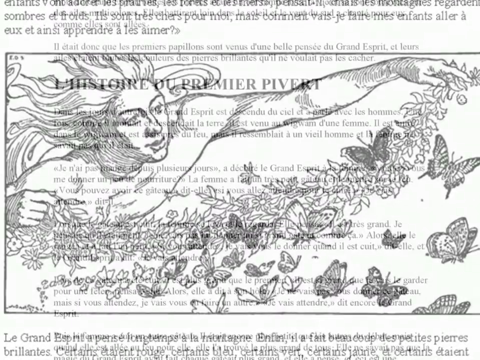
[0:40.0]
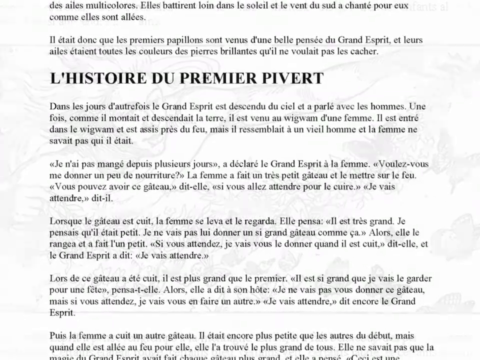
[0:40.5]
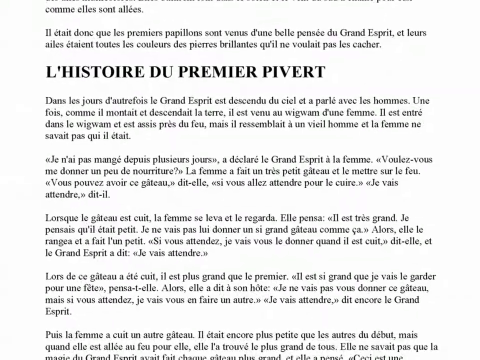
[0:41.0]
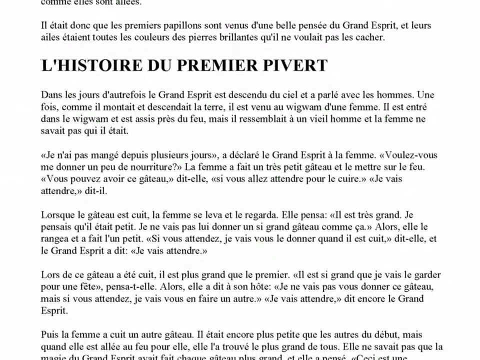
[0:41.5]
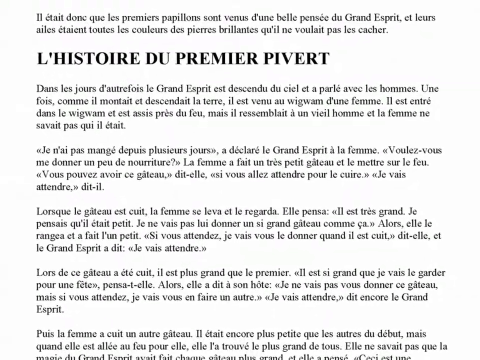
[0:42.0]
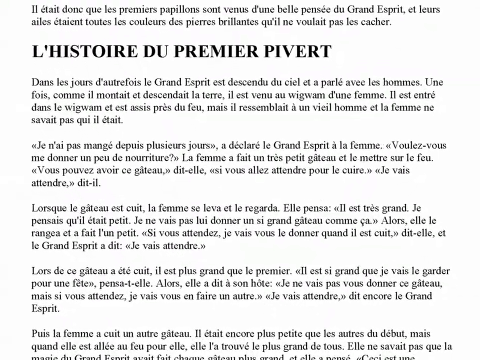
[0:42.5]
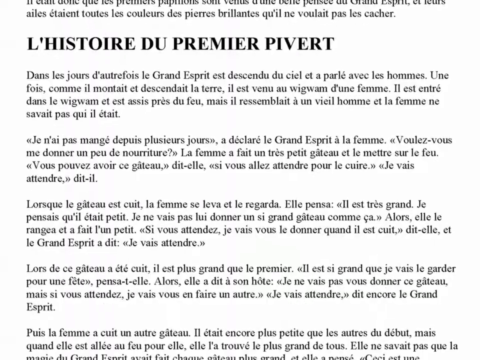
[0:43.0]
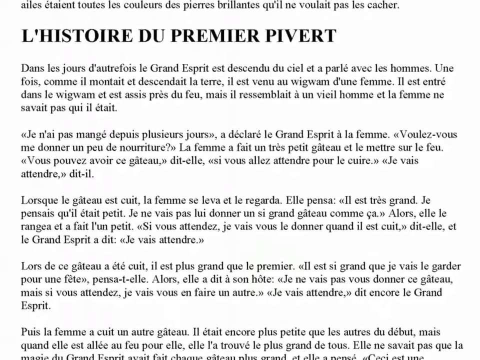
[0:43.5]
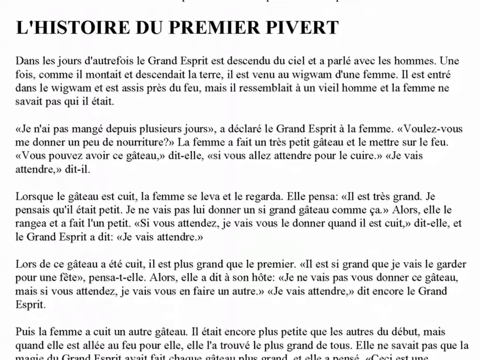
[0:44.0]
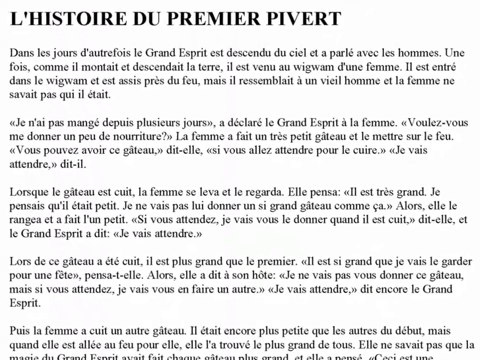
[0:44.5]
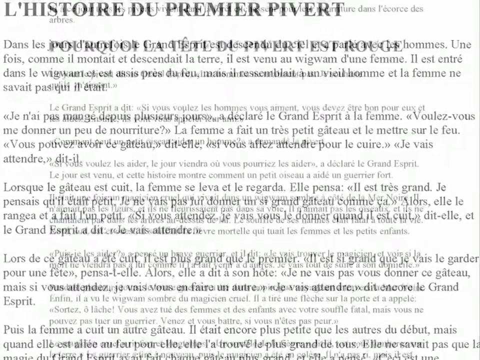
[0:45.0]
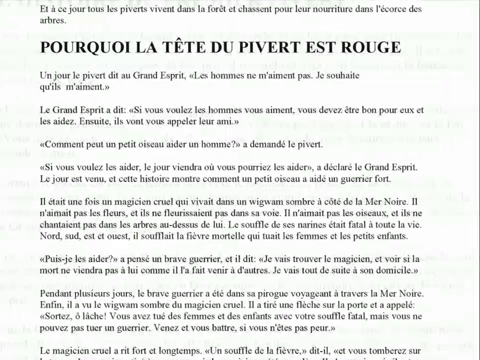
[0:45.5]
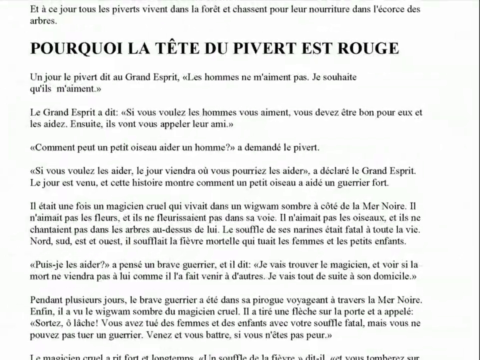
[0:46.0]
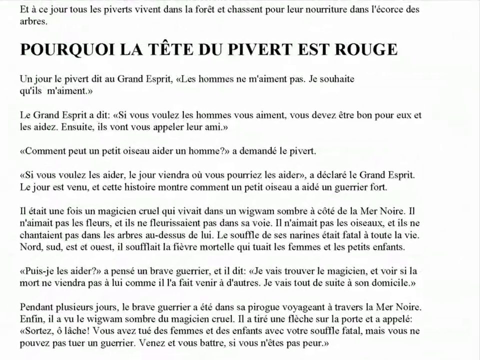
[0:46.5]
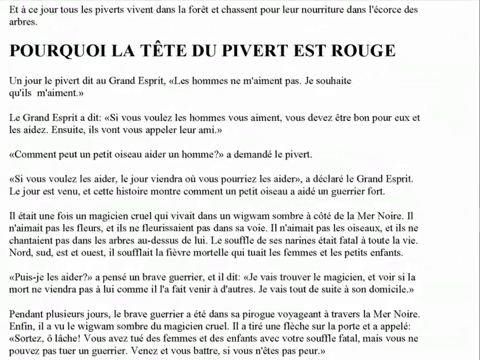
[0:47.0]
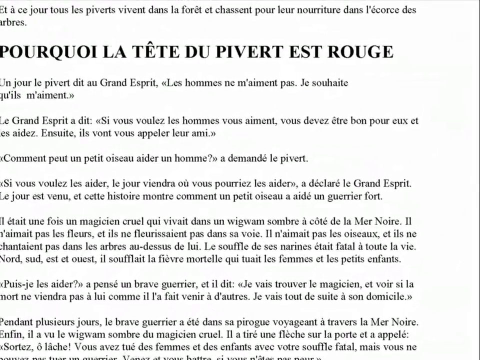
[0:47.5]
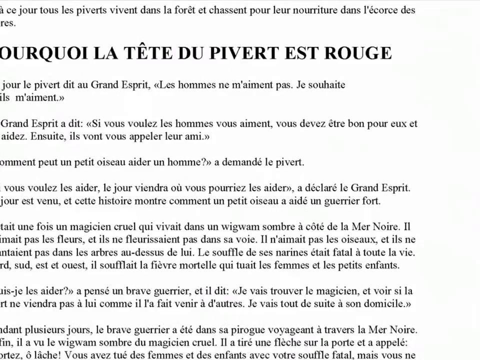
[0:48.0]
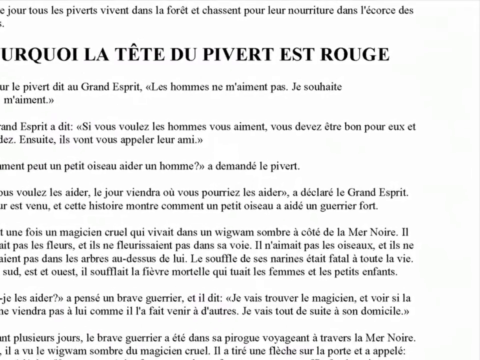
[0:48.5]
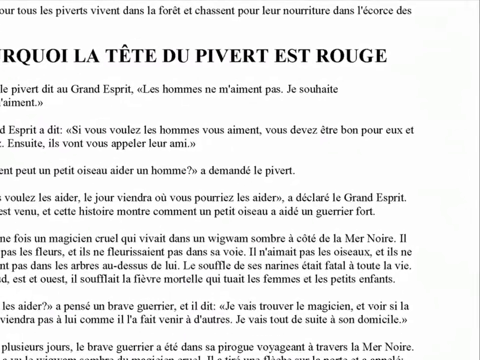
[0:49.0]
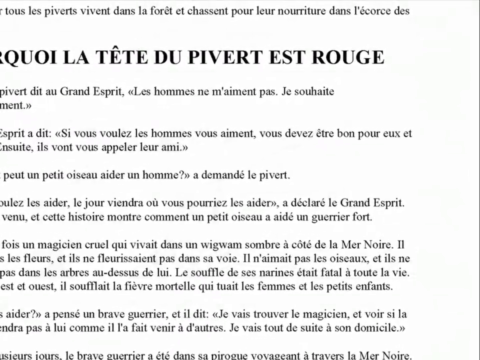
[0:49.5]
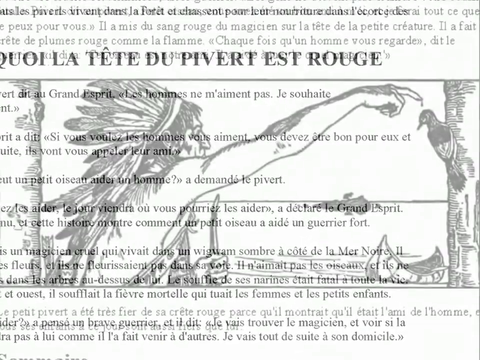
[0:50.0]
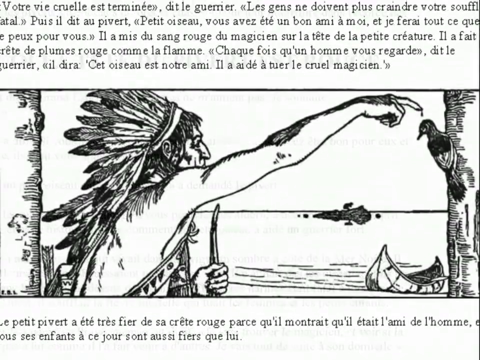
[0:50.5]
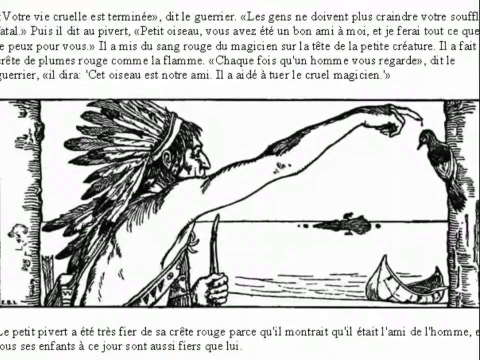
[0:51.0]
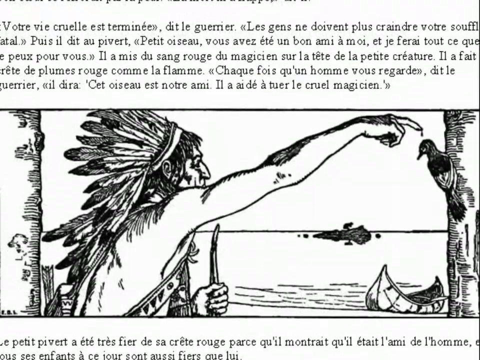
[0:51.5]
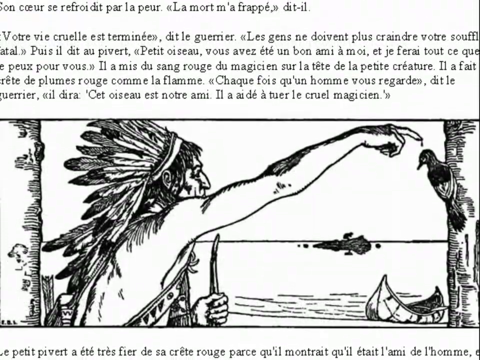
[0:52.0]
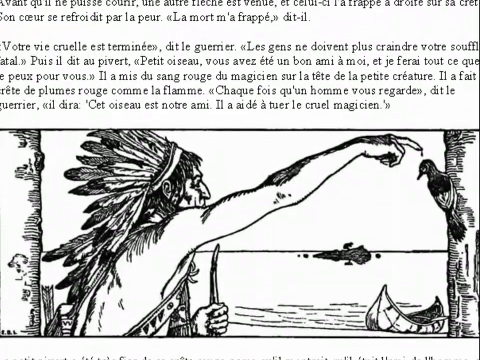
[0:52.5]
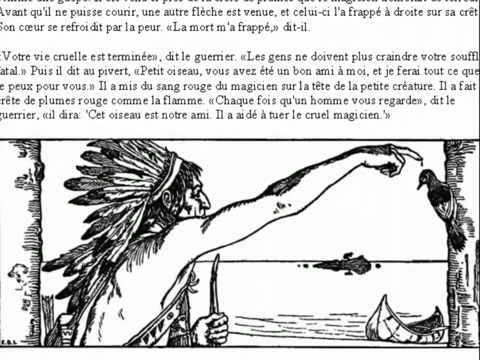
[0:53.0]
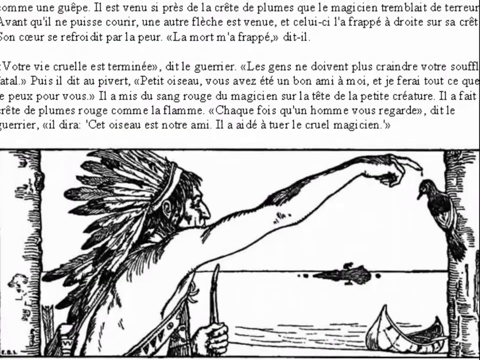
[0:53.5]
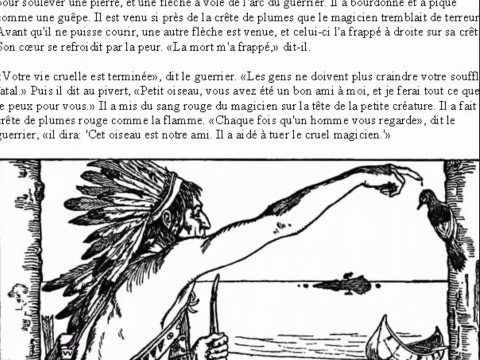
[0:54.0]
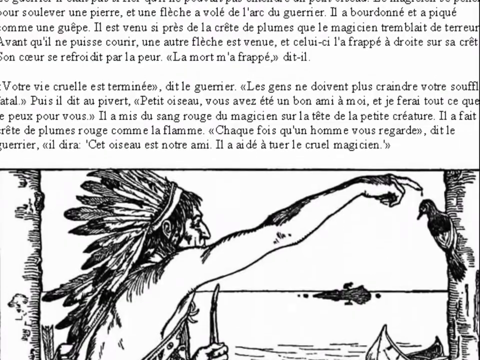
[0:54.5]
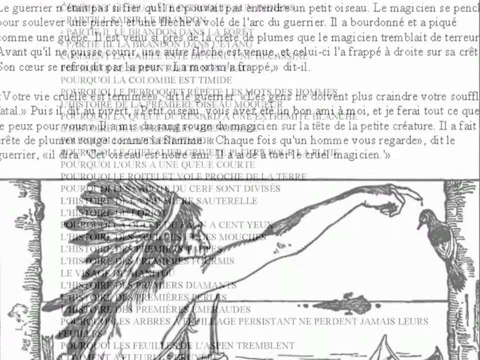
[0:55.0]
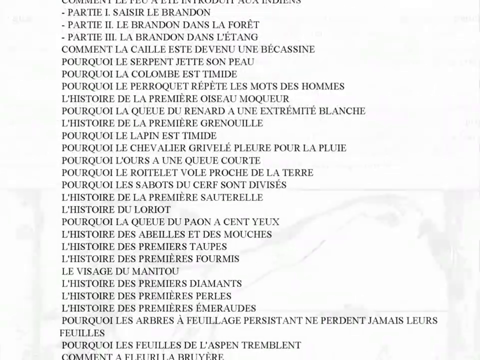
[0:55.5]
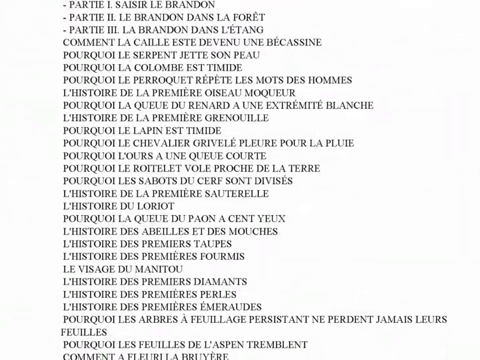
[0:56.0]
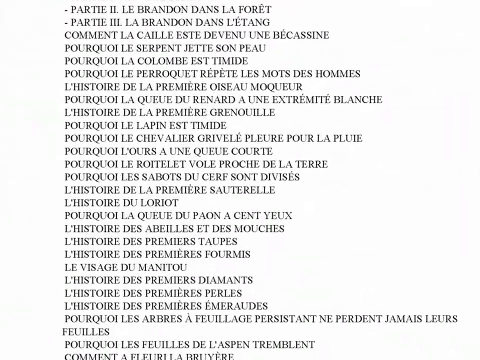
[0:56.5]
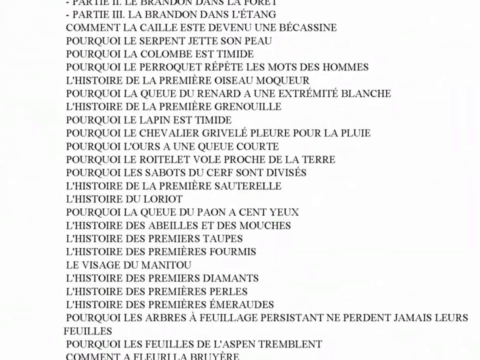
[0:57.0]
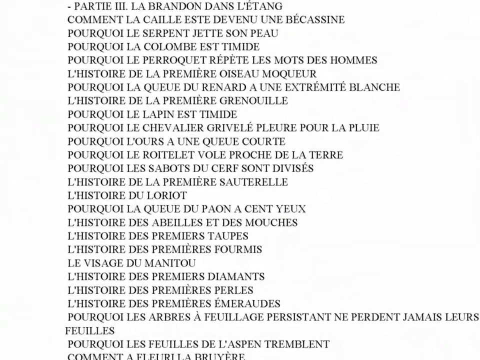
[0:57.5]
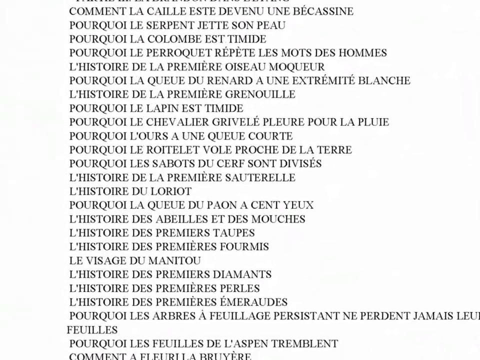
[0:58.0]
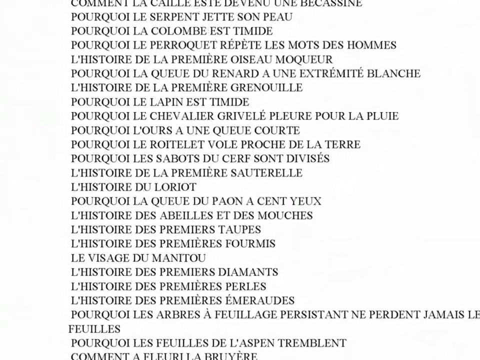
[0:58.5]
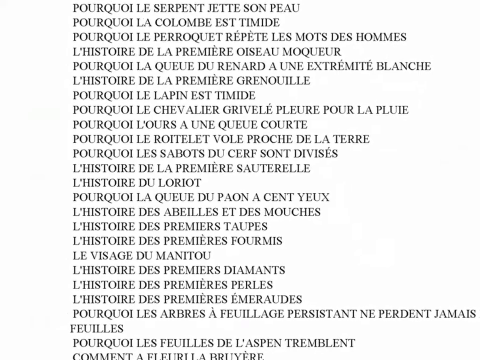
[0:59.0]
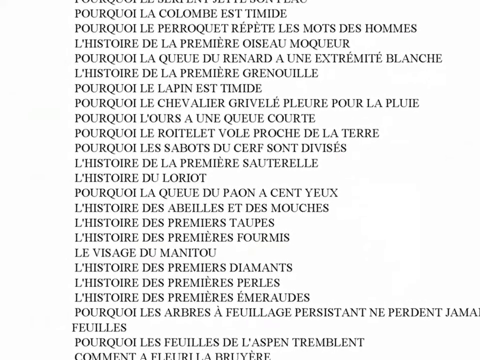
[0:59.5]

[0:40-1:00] After a transition, another page full of foreign-language text appears, and the camera slowly pans toward the bottom of the page while zooming in slightly. Another transition shows another page, and the camera moves toward the top right and zooms in. Next comes a page with a small pencil drawing in the center of what appears to be a native with a large bundle of feathers in their hair, standing between two trees. They reach out with their right hand, pointing toward the head of a bird that appears to be hanging from the right tree, and hold what appears to be a bow in their left hand. The camera moves toward the top of the page. Another transition shows a long list of items that appears to be a table of contents or an index, followed by another transition.